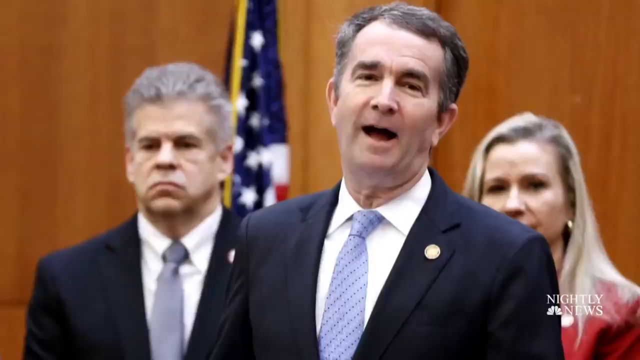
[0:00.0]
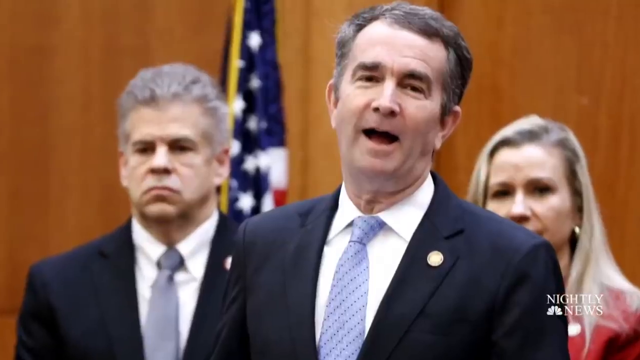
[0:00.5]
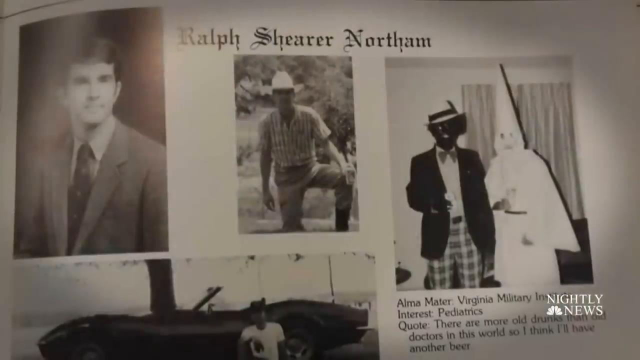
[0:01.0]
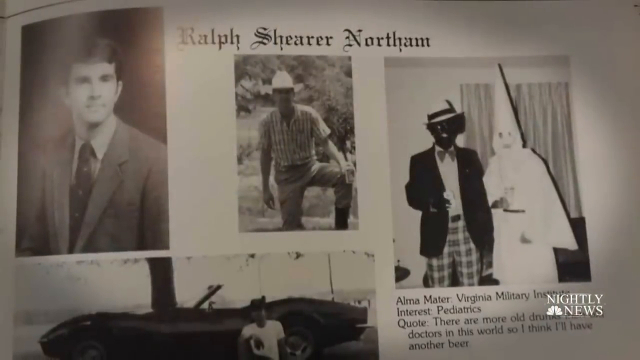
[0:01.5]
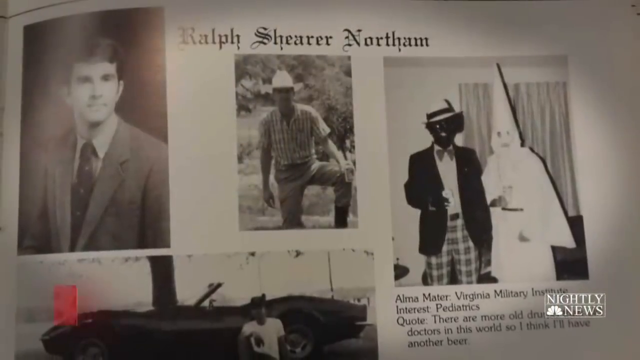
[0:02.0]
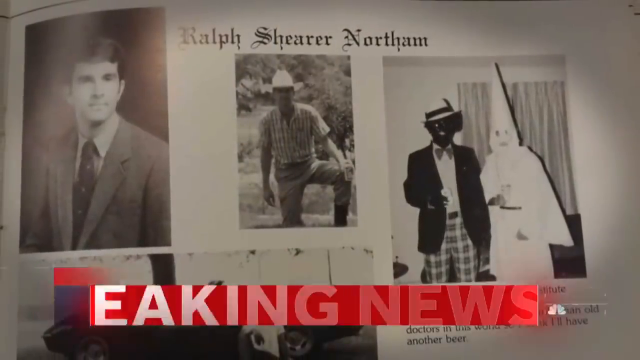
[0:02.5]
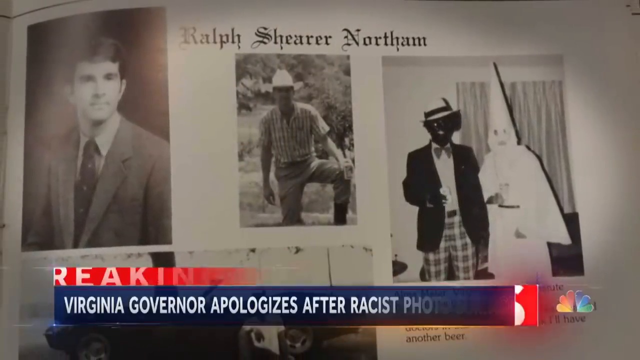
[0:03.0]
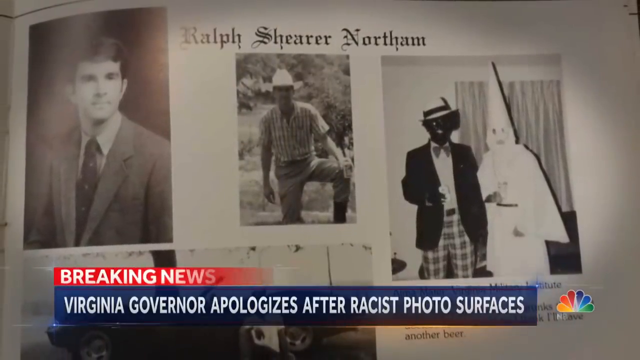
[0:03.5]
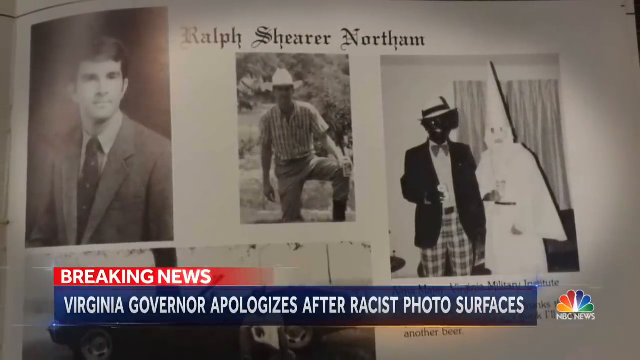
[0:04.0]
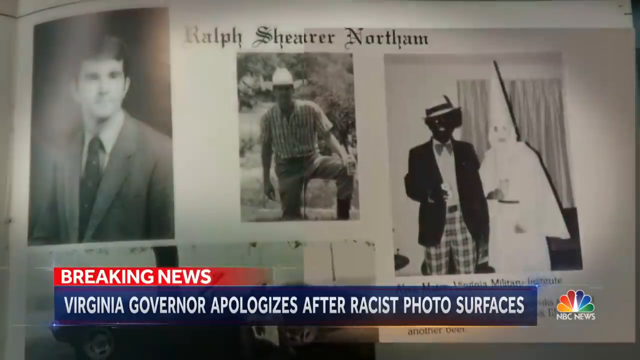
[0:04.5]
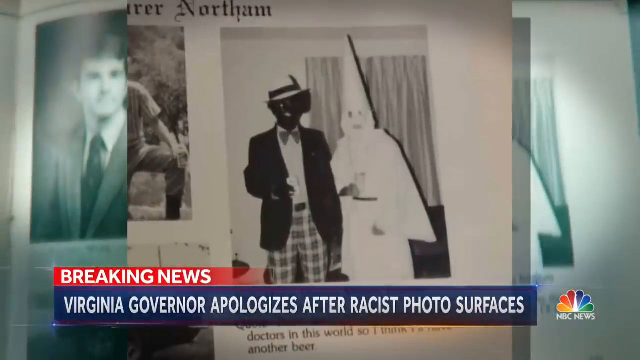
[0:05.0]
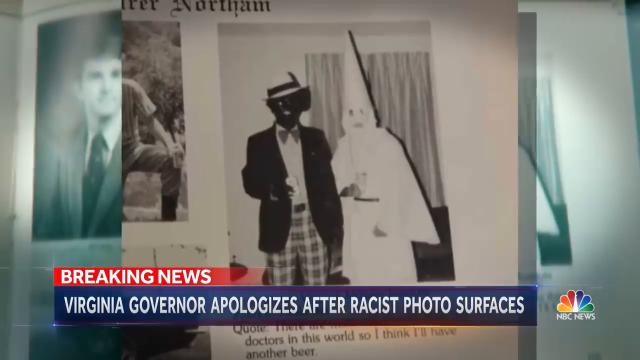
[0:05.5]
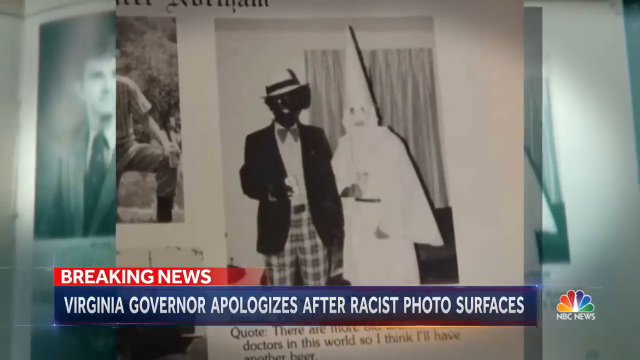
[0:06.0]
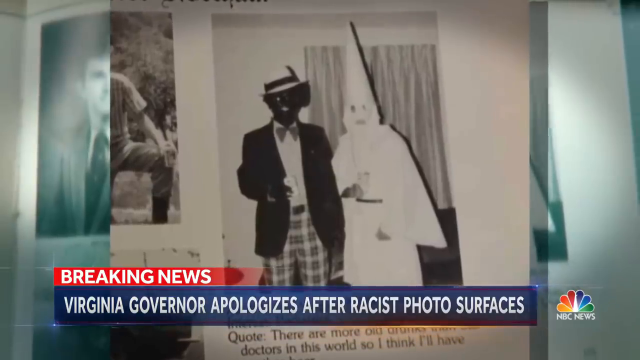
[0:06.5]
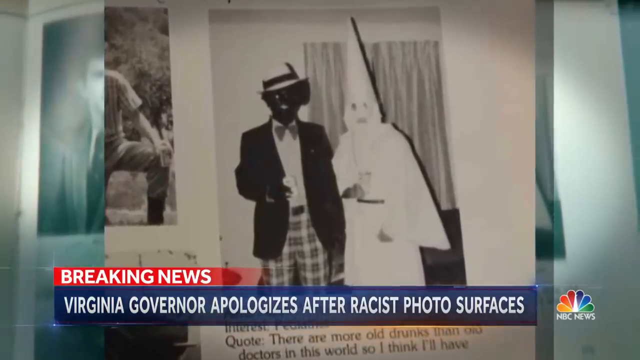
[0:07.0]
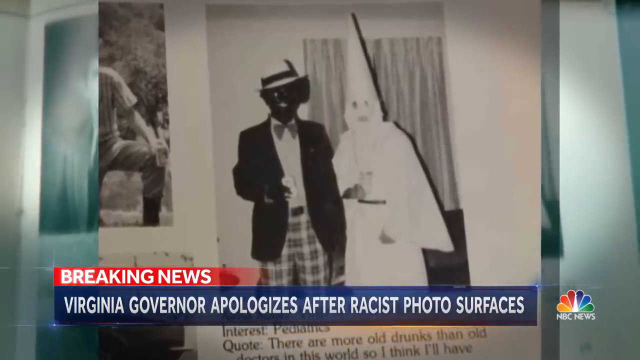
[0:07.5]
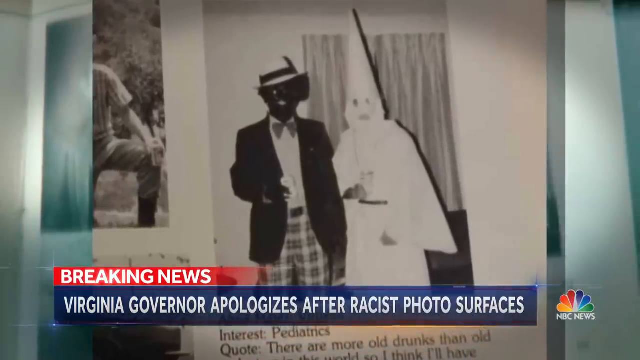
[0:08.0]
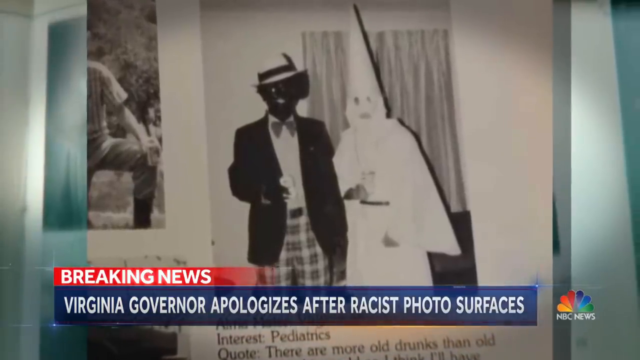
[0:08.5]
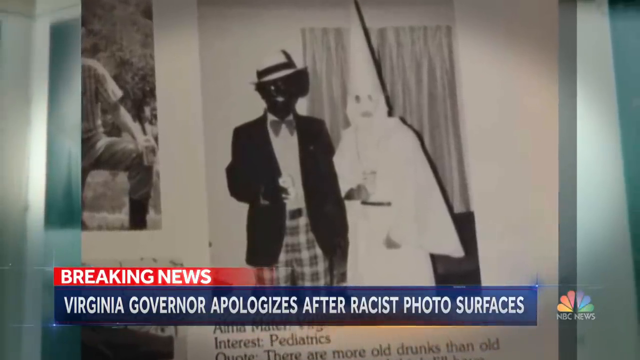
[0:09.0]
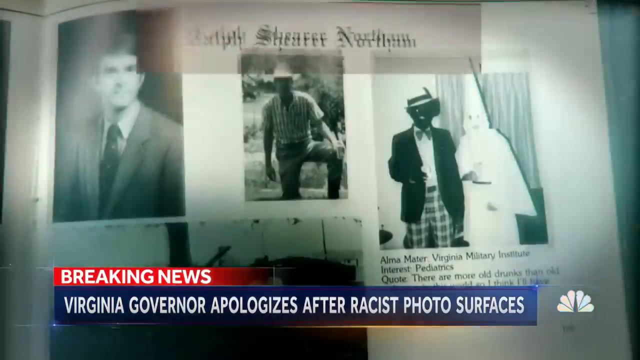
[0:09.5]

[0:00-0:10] This NBC Nightly News segment opens with a photograph of a politician from Virginia, then cuts to a black-and-white yearbook photo of Ralph Shearer Northam. A chyron appears reading "Breaking news" and "Virginia governor apologizes after racist photo surfaces." A yearbook lies open to a photograph showing the Virginia governor in blackface standing next to a person dressed as a grand wizard of the KKK, which is the topic of the news segment.